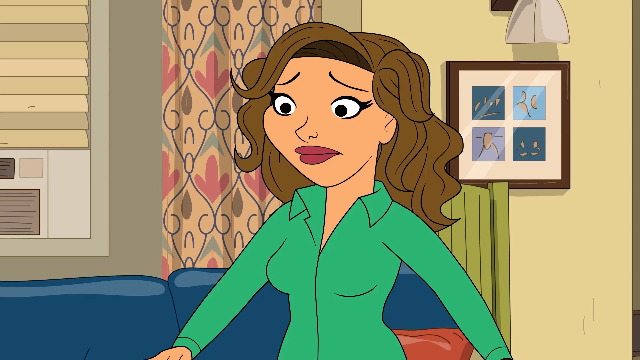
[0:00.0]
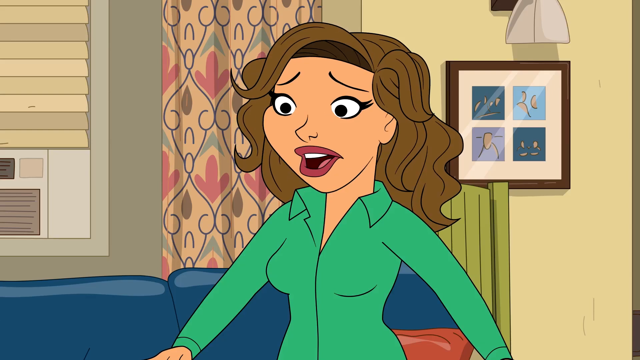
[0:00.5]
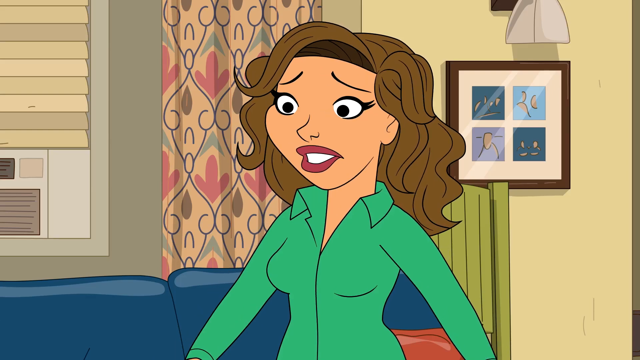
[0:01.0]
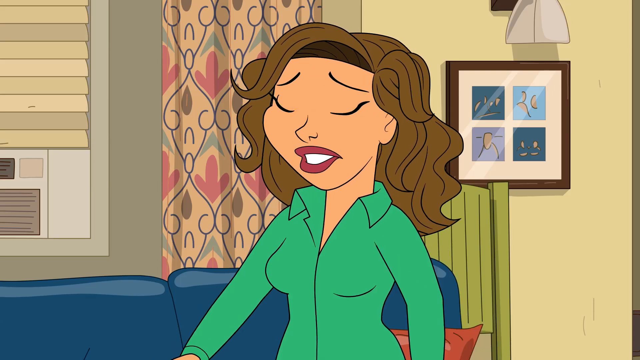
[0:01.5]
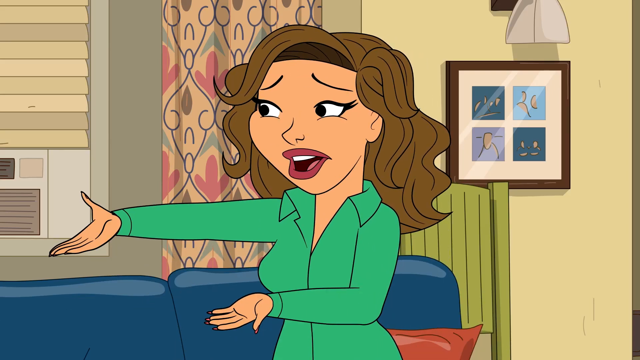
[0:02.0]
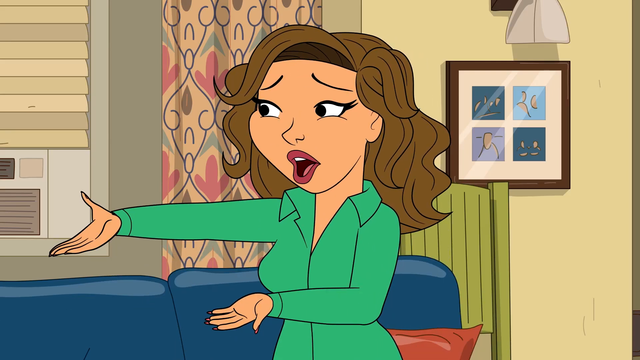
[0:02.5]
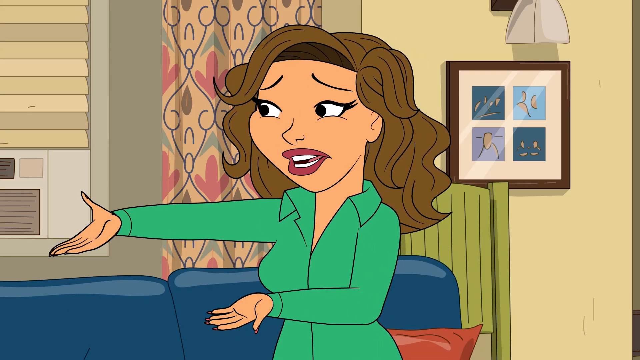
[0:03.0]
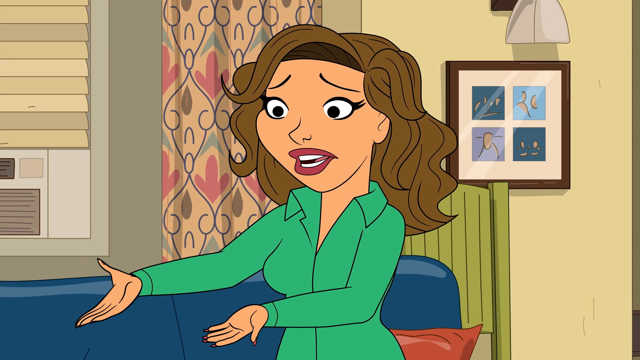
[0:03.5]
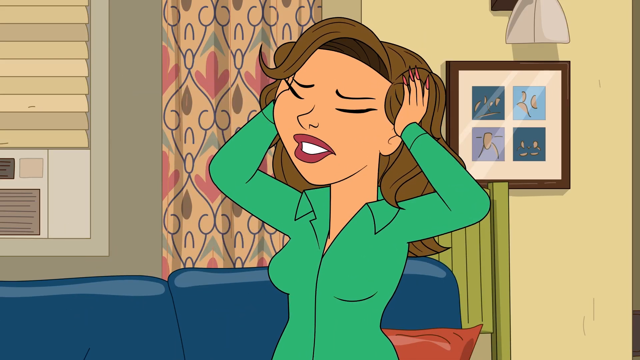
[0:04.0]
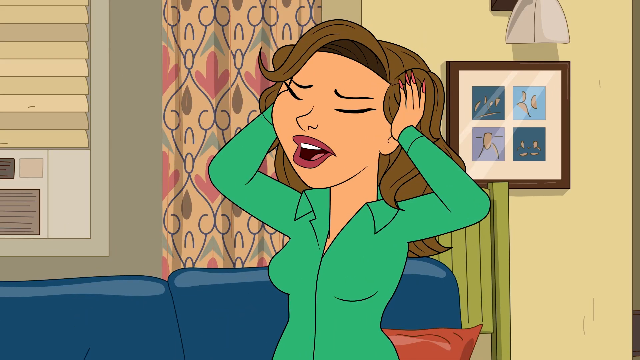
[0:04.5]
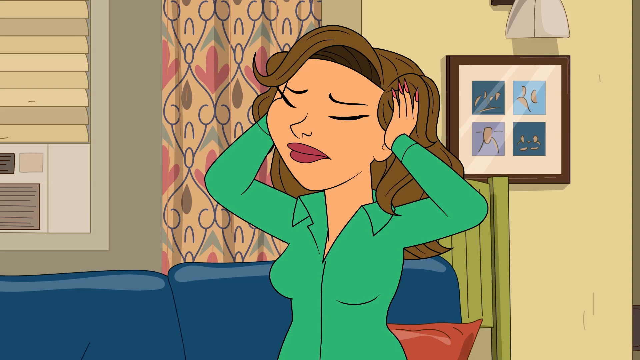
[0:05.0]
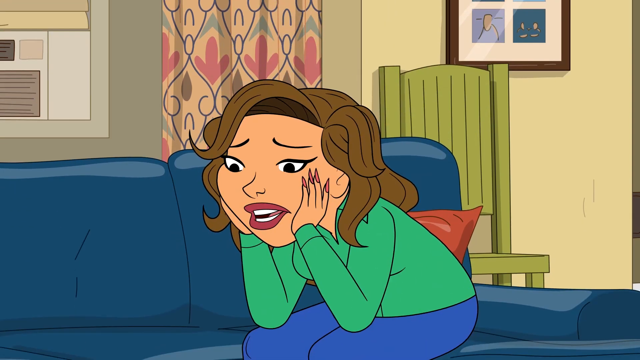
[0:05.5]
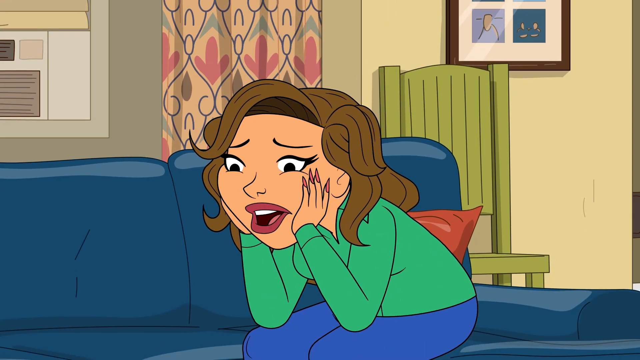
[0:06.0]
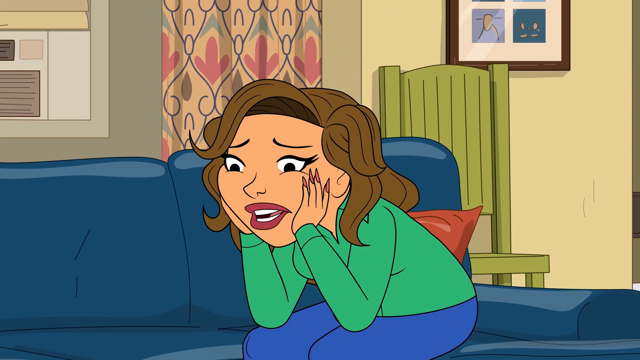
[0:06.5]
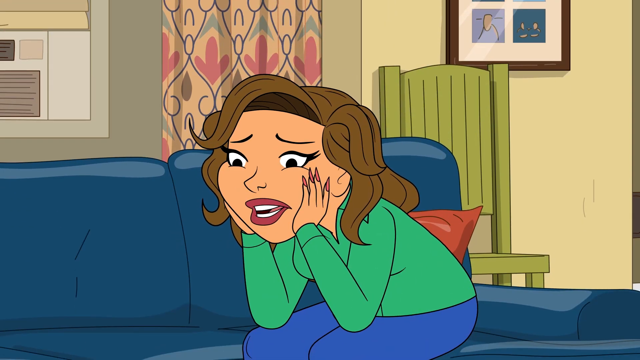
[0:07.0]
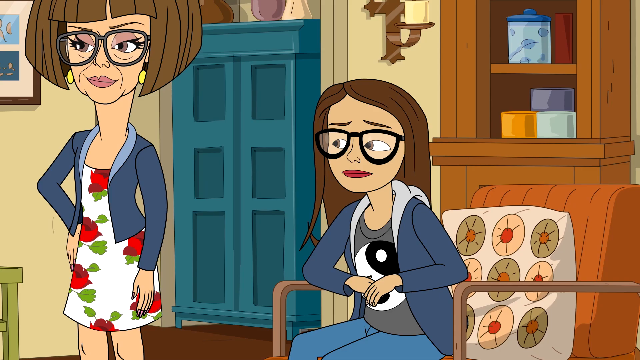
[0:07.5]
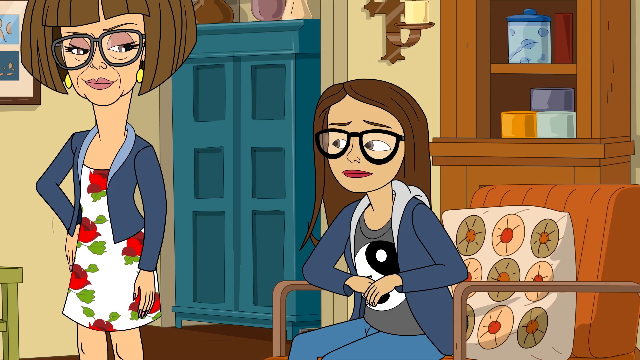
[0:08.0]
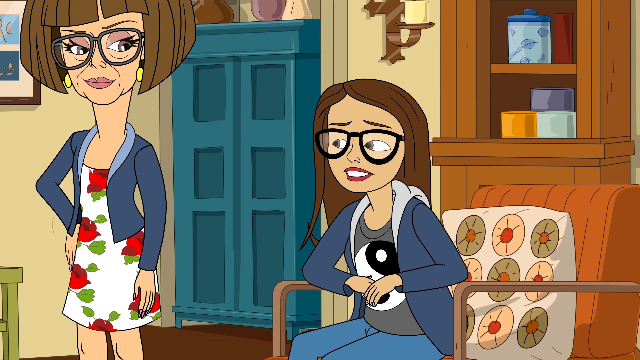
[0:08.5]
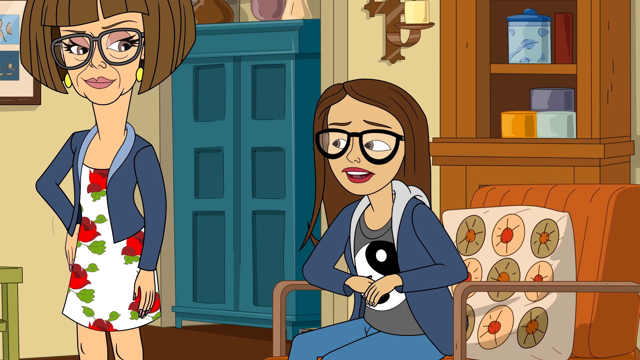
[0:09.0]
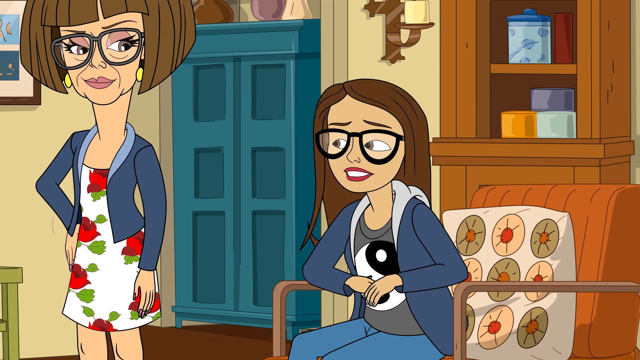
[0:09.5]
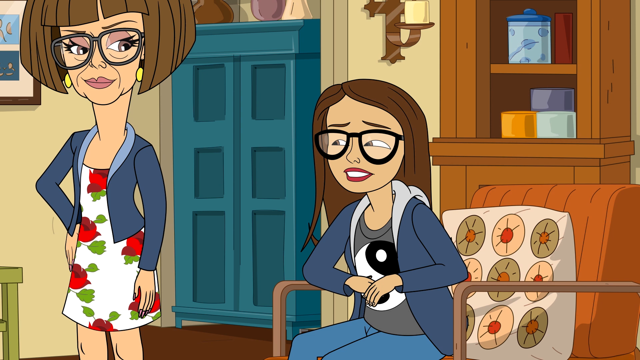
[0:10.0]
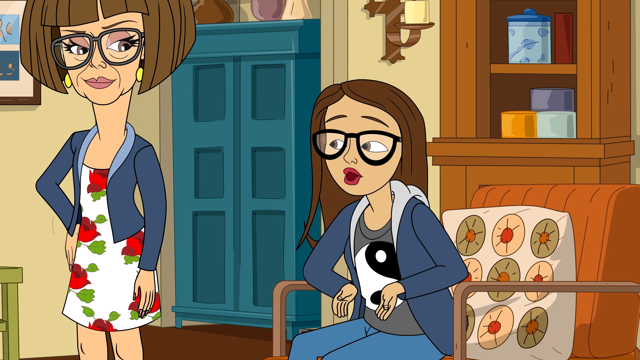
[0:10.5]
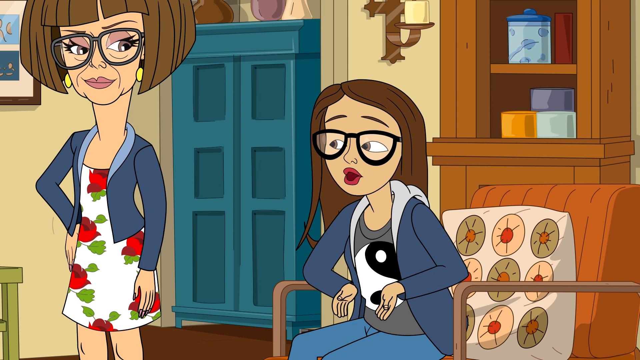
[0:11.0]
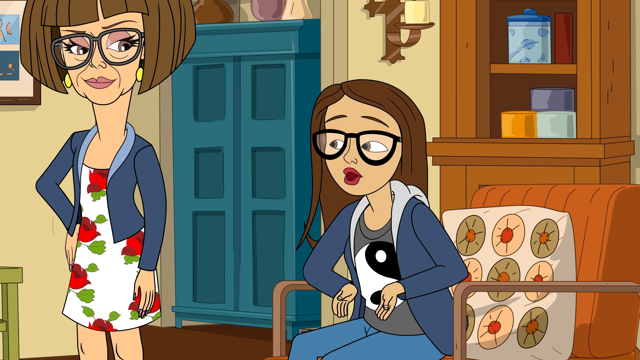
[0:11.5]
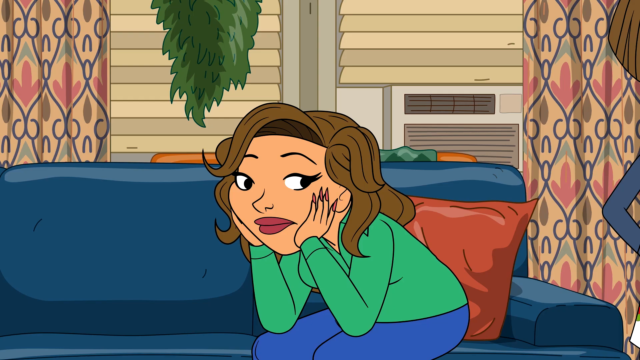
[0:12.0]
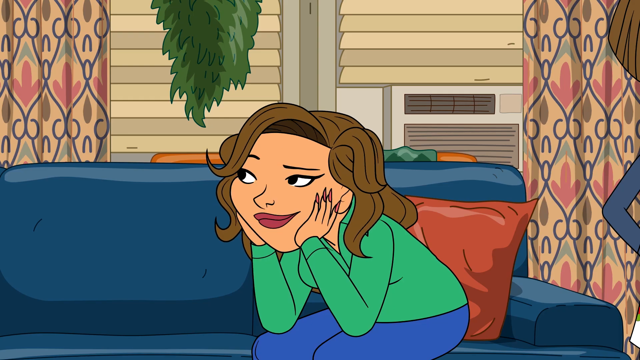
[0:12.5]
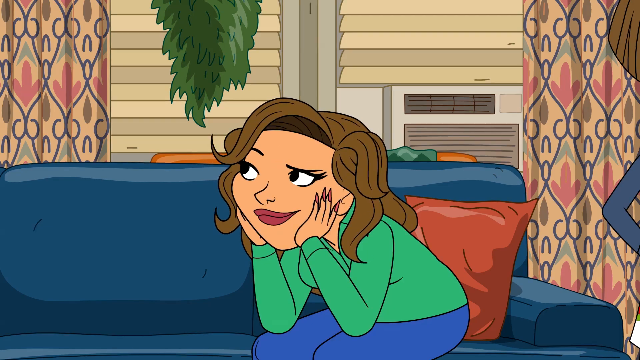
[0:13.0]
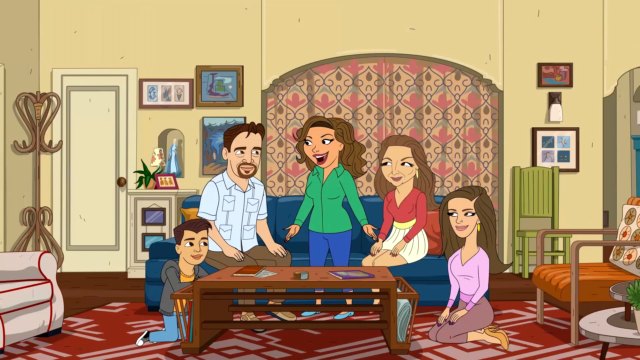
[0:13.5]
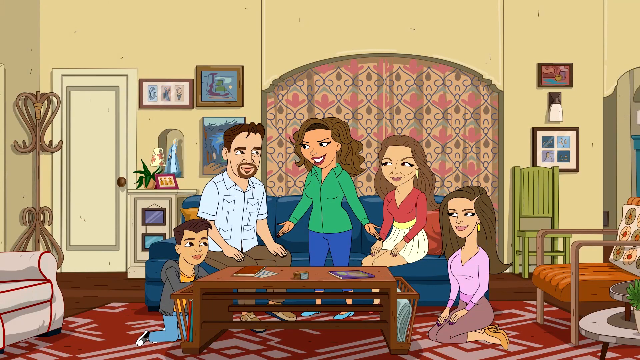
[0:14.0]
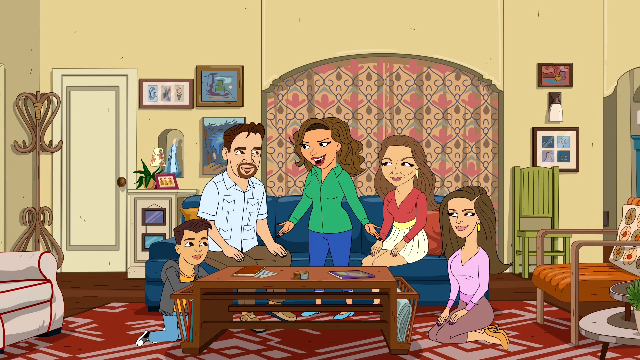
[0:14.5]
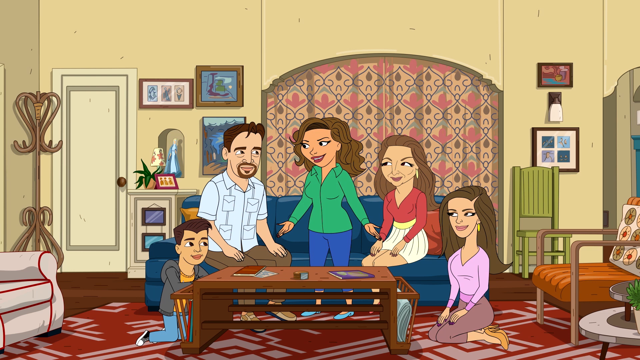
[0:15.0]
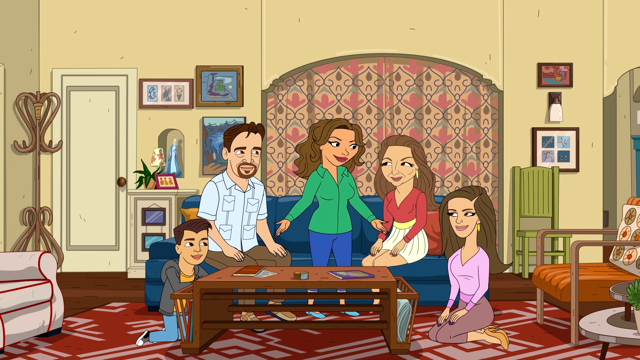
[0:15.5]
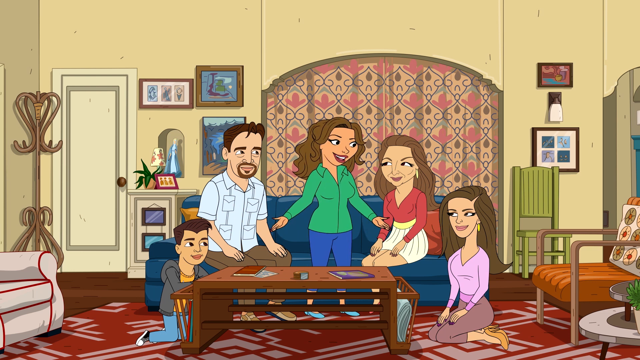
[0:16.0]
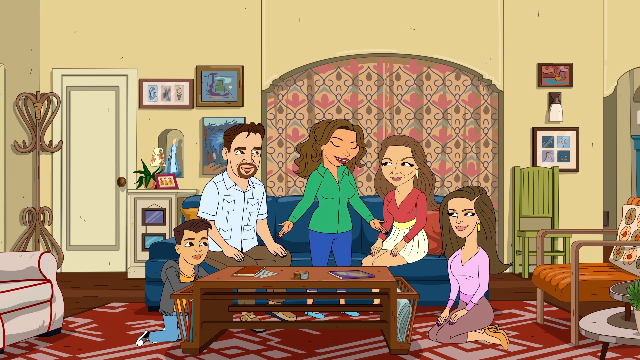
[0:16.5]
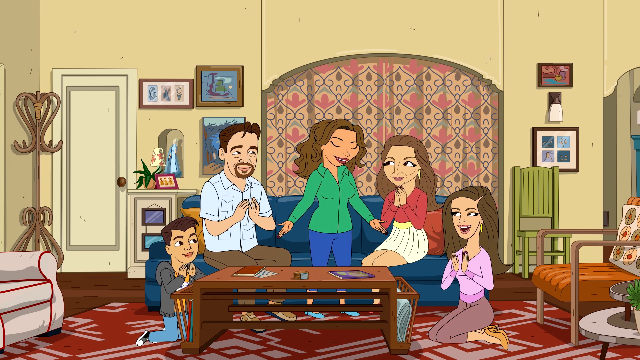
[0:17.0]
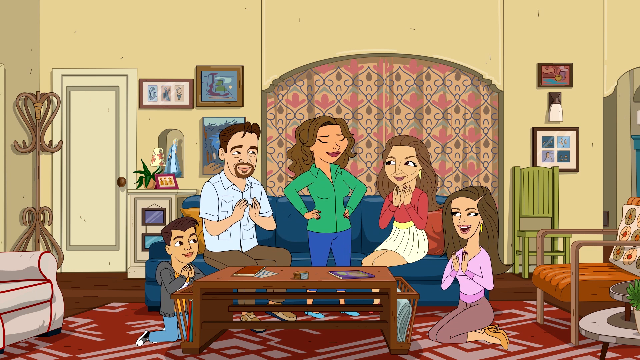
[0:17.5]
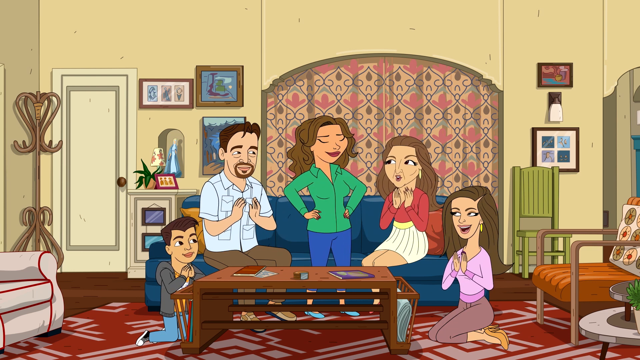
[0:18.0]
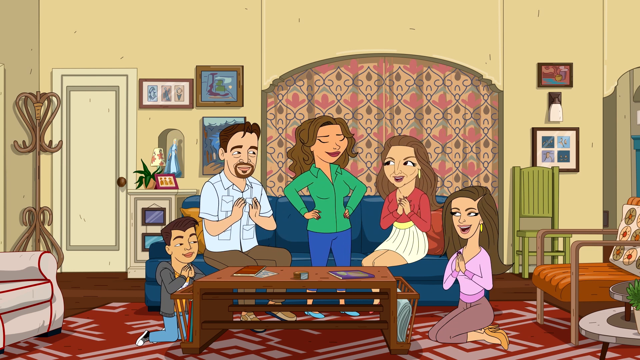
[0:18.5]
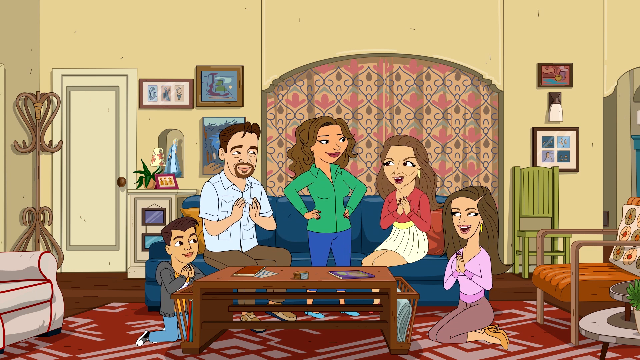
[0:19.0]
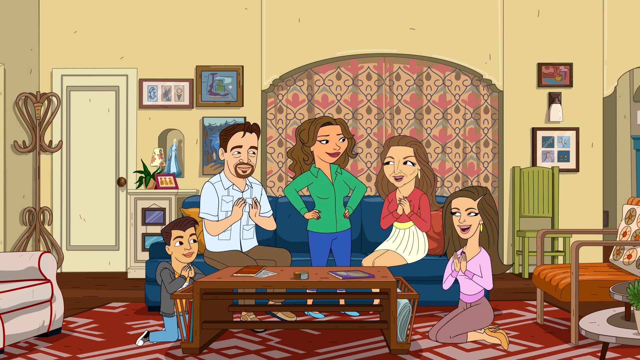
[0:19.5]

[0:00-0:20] A brown-haired woman with red lips, wearing a green long-sleeve shirt, is having a conversation. She holds her hair and then her cheeks, and then sits down. Two women are next to her: one is sitting on the table and the other is sitting on the couch. There are another two people: a man sitting on a blue couch and a young boy sitting on the floor. As the conversation continues, the woman looks stressed; she is wearing blue pants. The woman who is standing has a colorful dress that is white with red roses. The video moves from a person talking to a lady sitting on a chair, with a lady standing next to her. When the video moves, different characters appear who are not the same as the ones who were responding to the woman. A woman wearing a pink or purplish t-shirt is sitting on the floor next to the coffee table. A lady wearing a reddish long-sleeve top and a short skirt is on the couch, along with an older-looking guy on the couch beside the lady who is standing. A boy is sitting on the floor. The room looks like a sitting or dining area with many details and furniture all around in different colors.